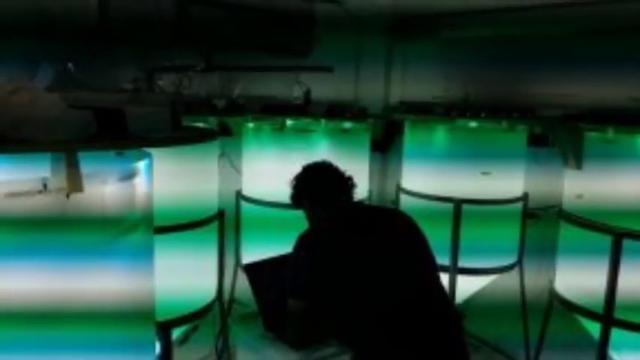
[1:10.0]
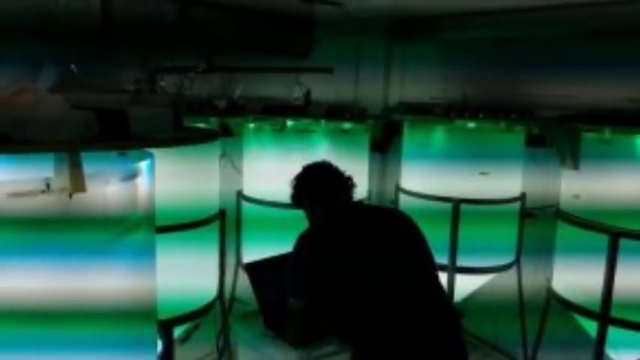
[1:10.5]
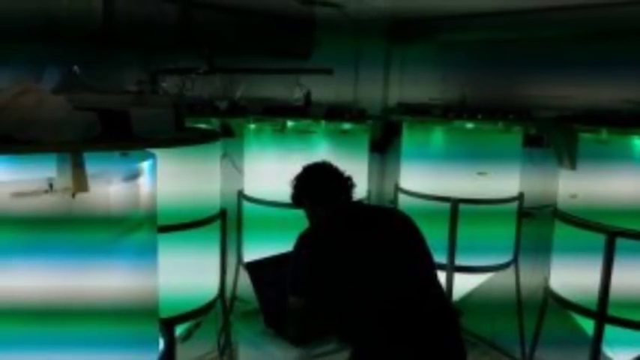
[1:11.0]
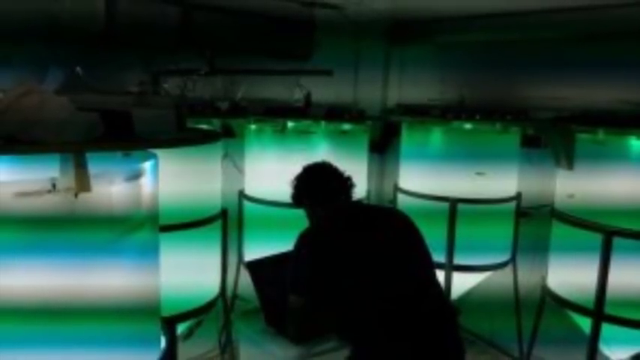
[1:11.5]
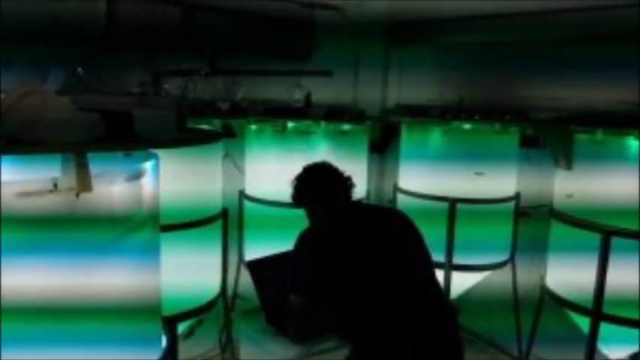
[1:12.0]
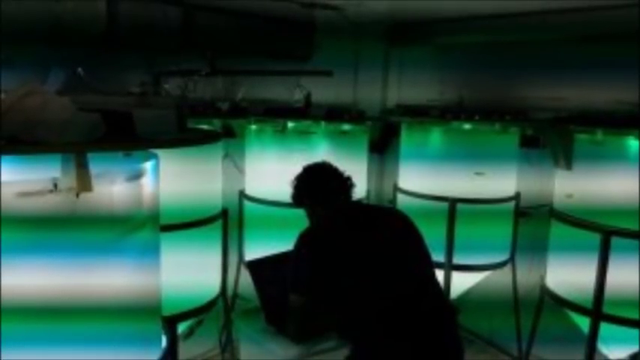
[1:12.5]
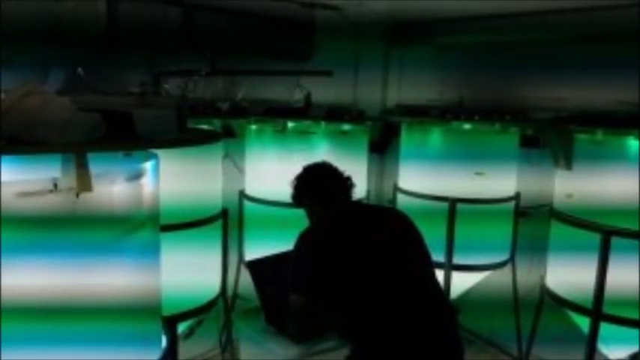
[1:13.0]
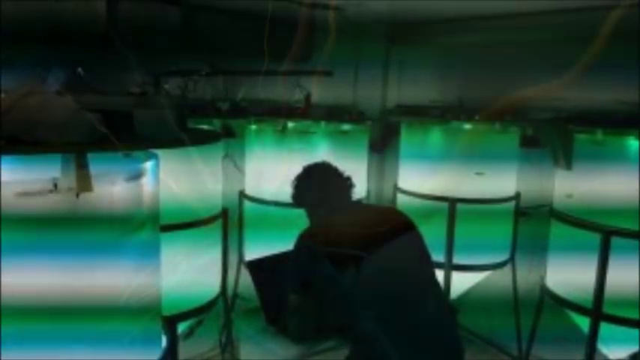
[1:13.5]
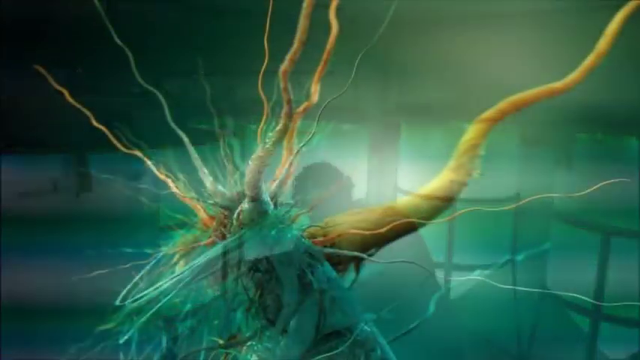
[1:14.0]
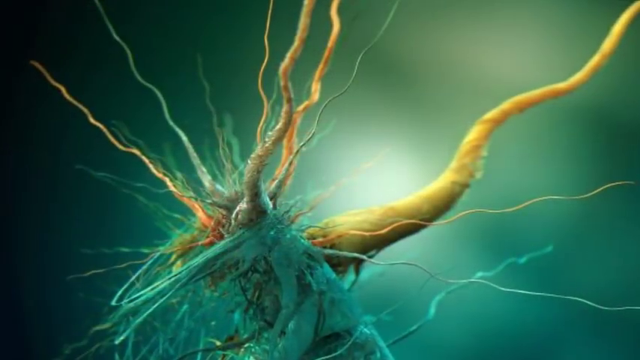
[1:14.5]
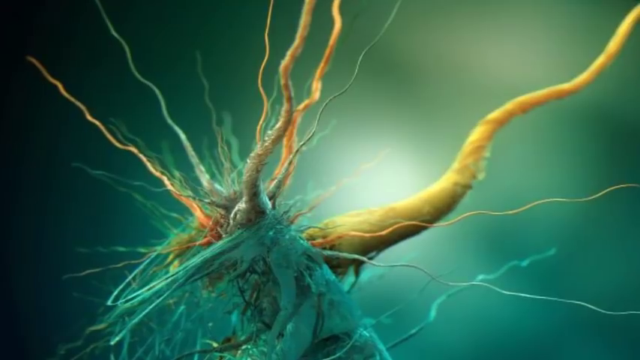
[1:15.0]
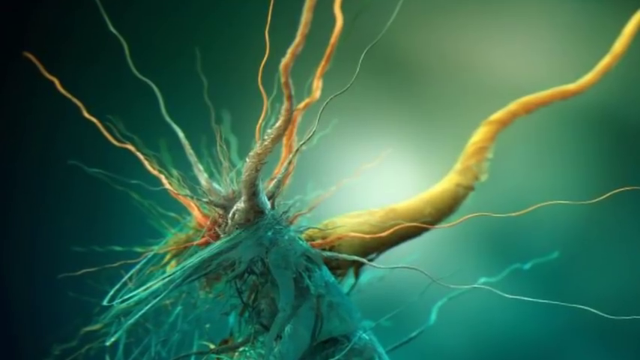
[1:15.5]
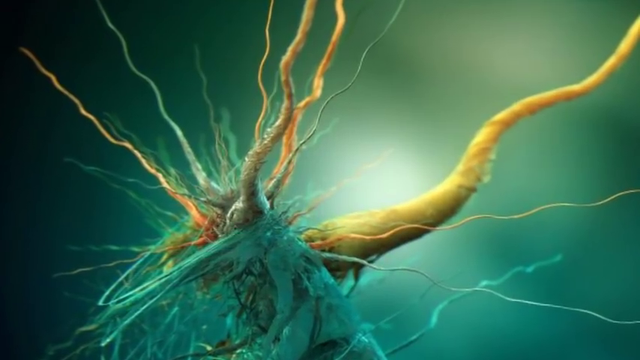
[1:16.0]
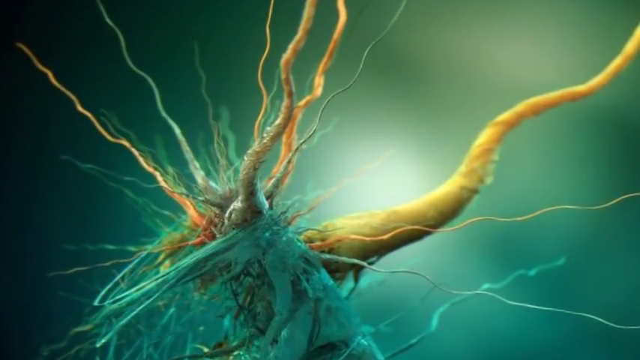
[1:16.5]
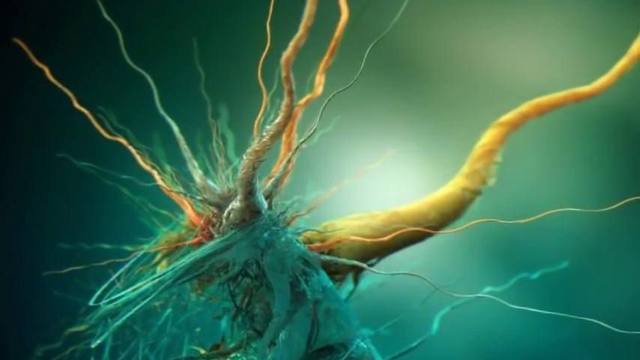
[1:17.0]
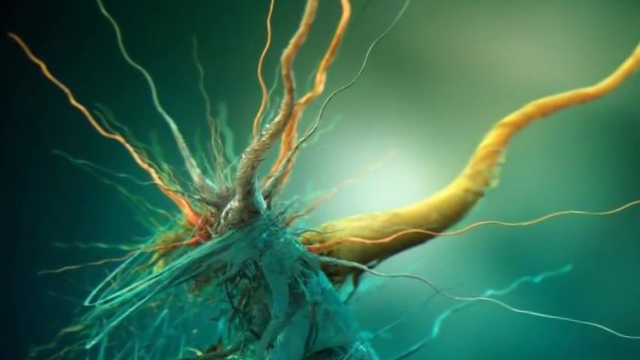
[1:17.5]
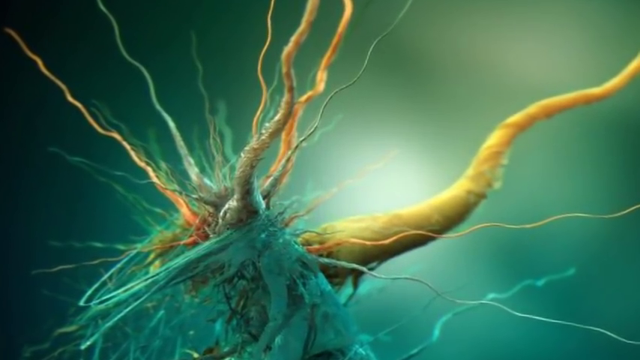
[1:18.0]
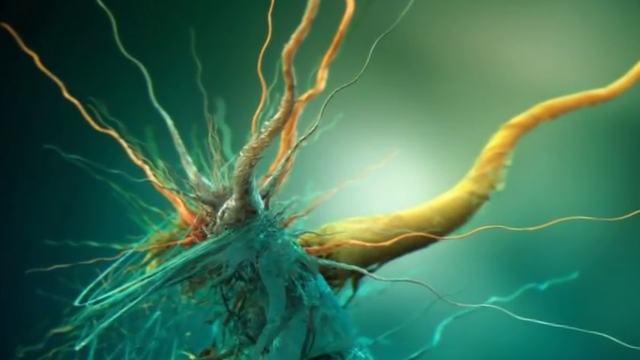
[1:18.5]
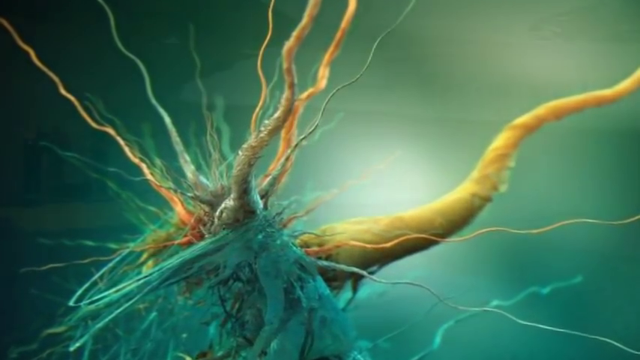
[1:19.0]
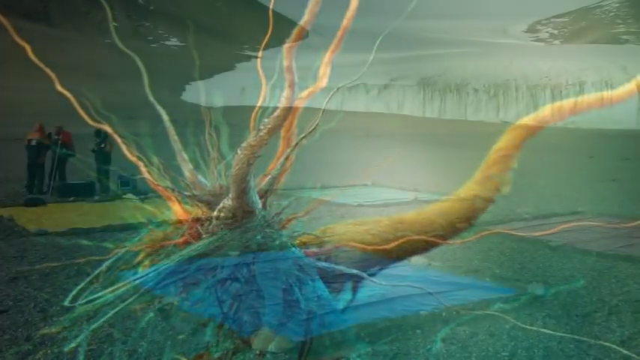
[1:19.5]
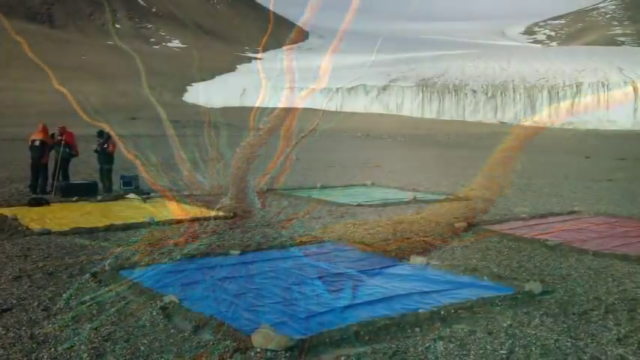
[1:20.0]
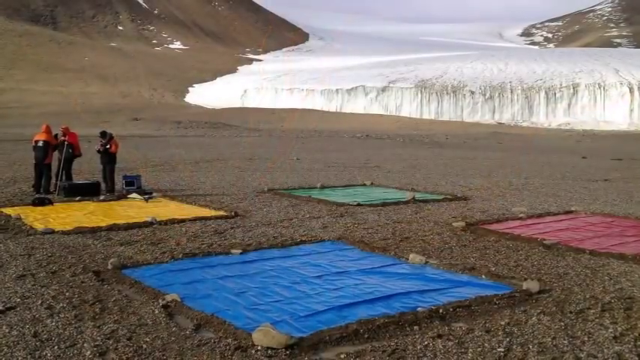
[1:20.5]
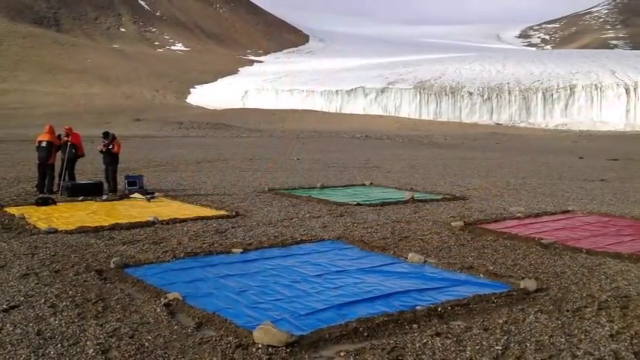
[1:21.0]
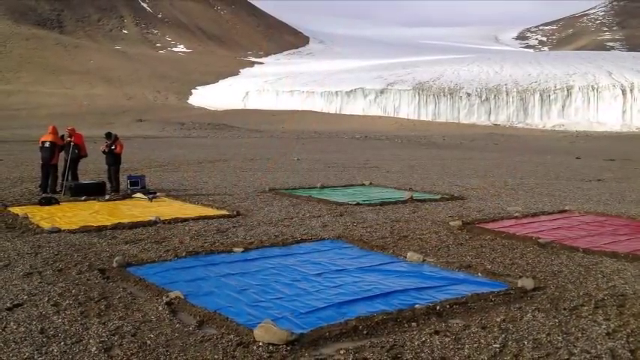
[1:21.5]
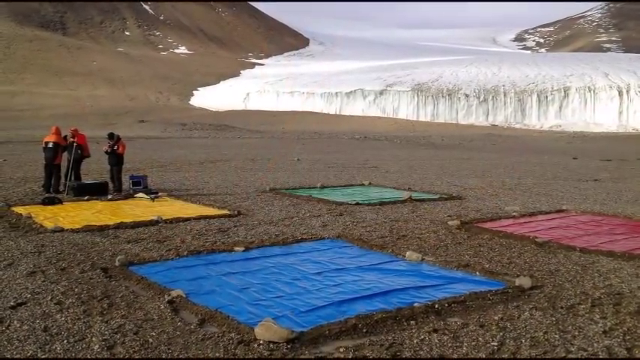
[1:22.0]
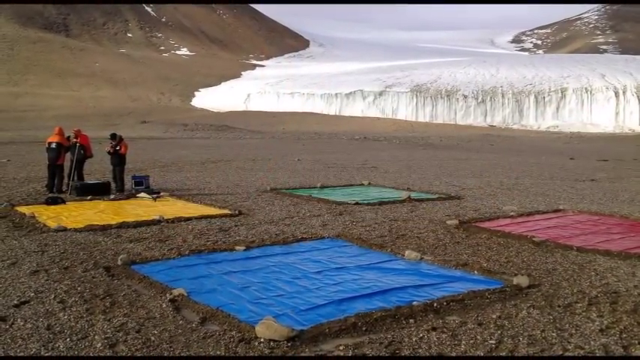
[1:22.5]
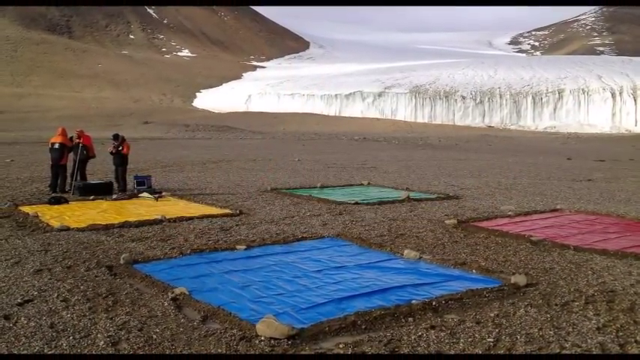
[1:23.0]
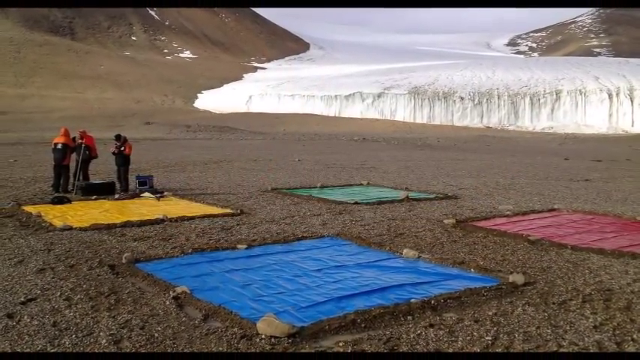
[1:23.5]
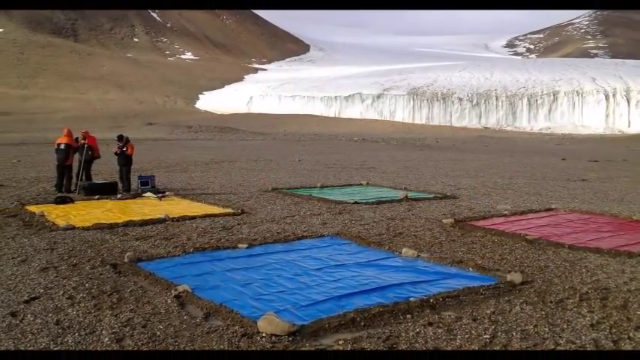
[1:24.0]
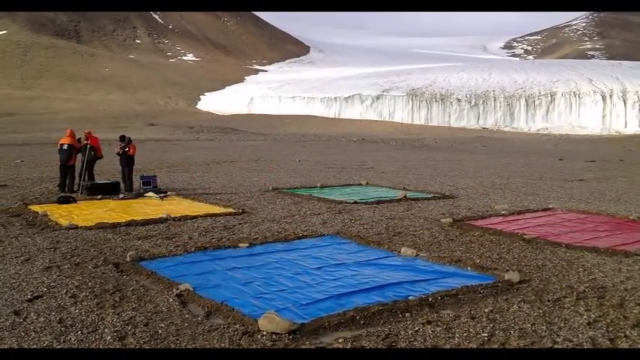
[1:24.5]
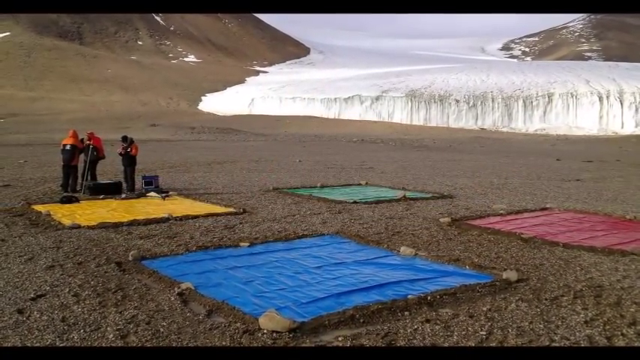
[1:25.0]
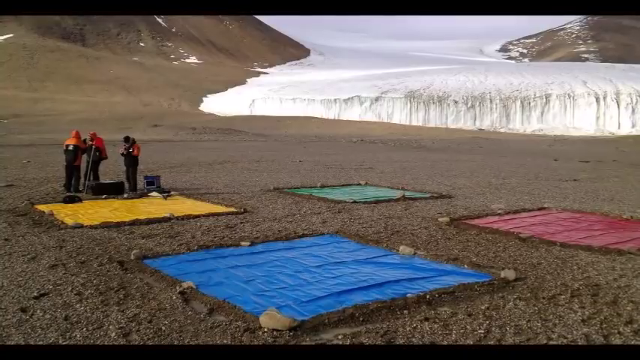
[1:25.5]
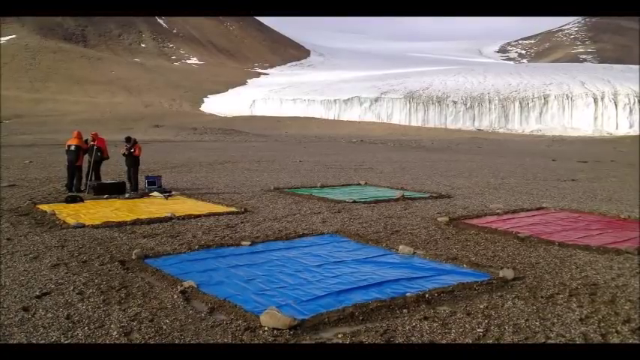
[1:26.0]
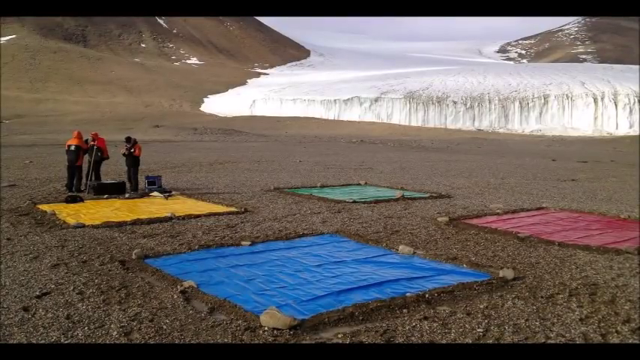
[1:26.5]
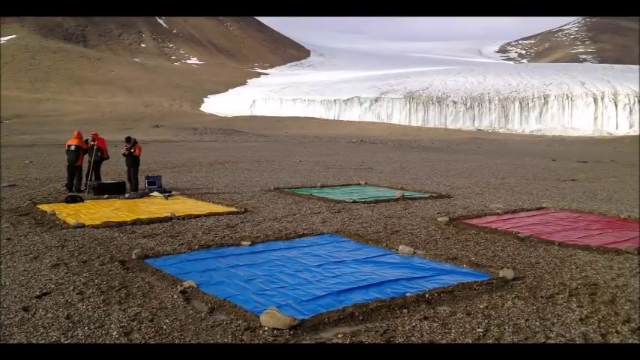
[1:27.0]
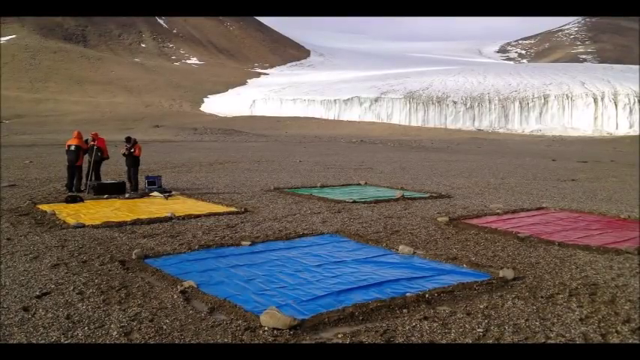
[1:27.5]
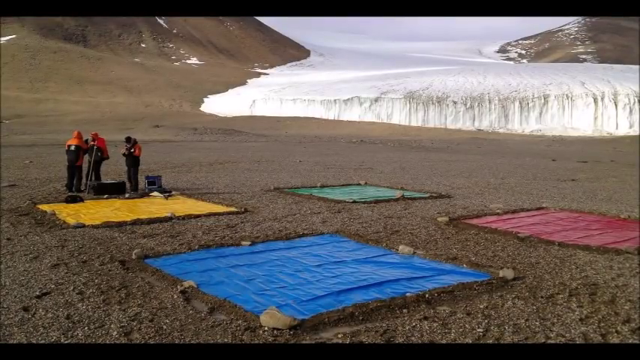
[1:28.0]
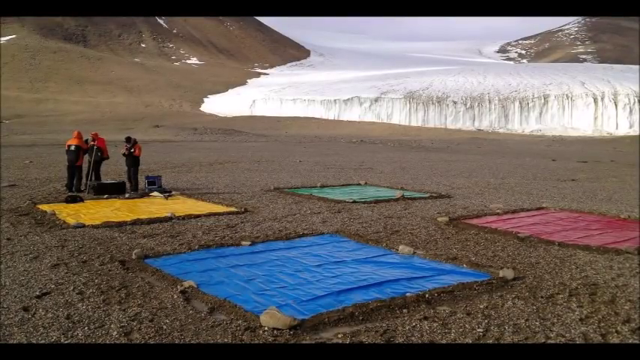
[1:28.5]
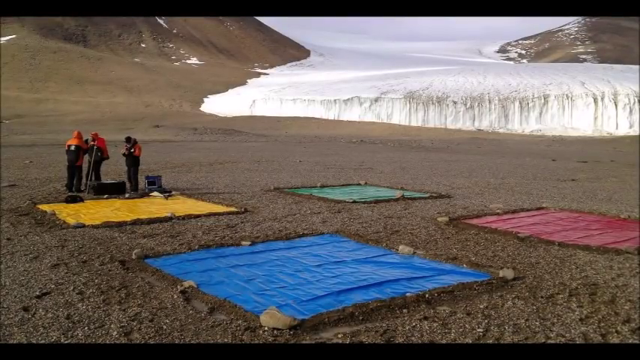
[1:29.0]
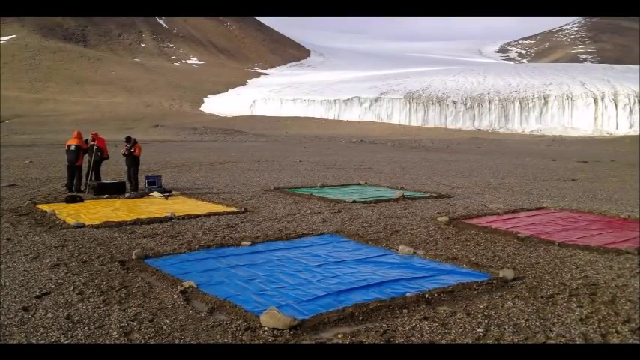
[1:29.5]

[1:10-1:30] The silhouetted man sits in the room, maybe with a laptop, with five green light strobes. Next comes an unidentified strange creature made of blue, yellow and gray material. People then work on the ground in a field where patches of yellow, green, pink and blue material are on the ground, and a person does research on it.